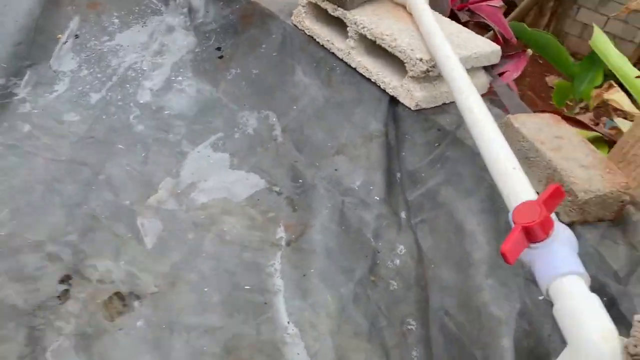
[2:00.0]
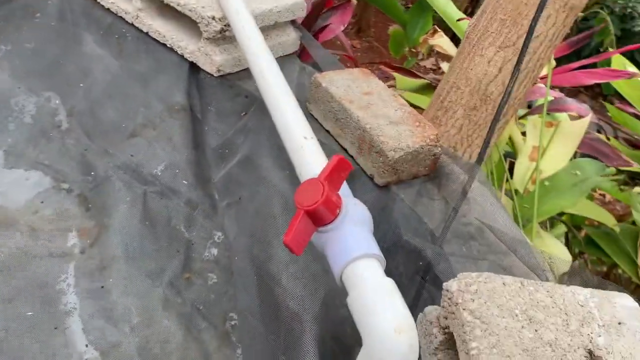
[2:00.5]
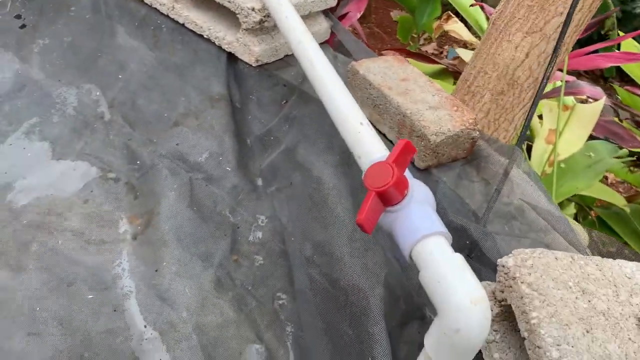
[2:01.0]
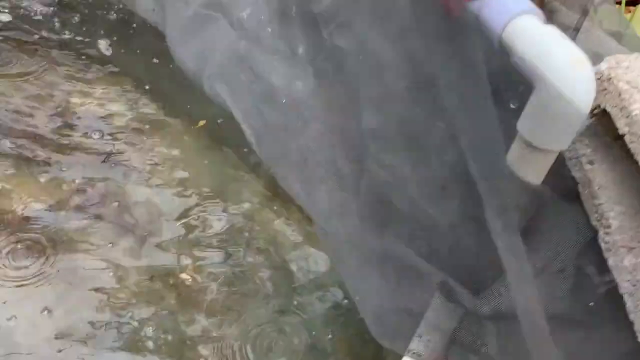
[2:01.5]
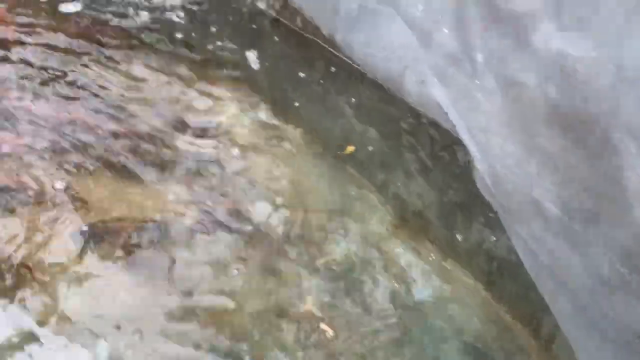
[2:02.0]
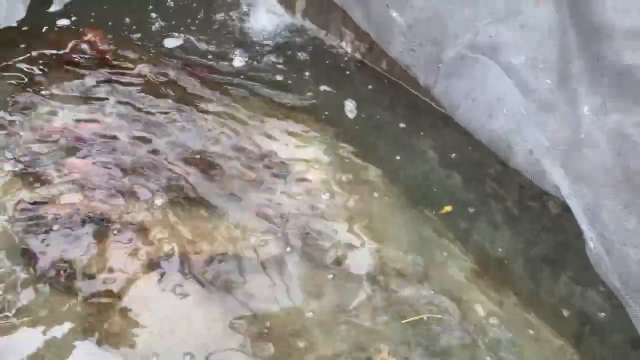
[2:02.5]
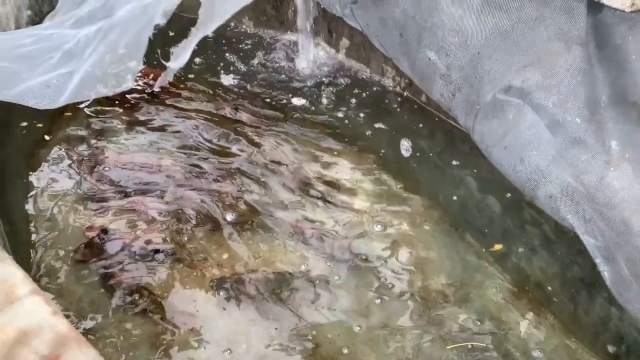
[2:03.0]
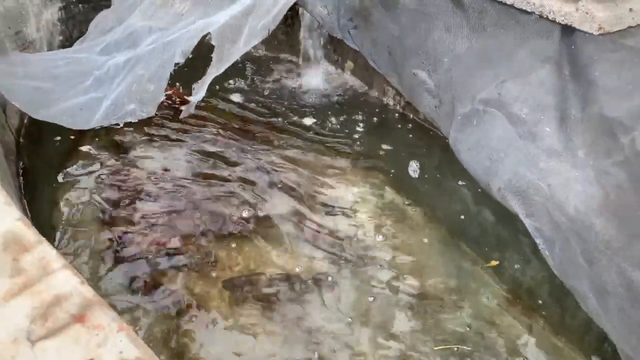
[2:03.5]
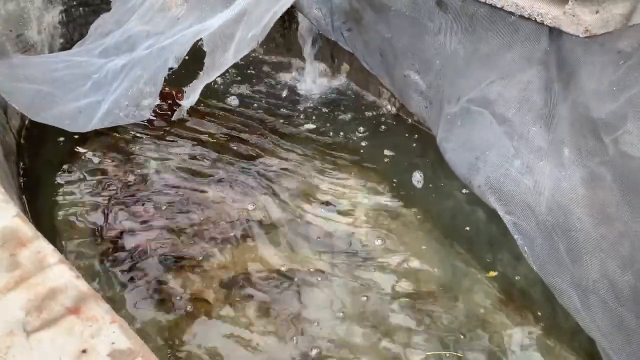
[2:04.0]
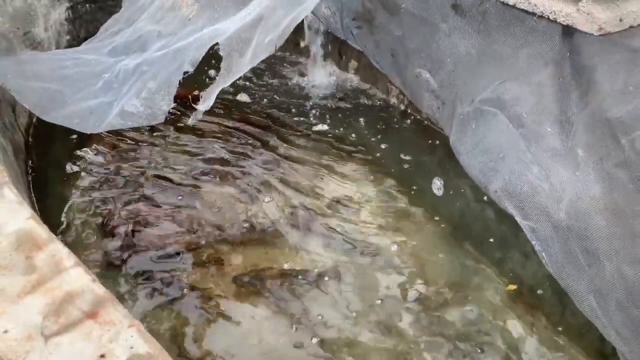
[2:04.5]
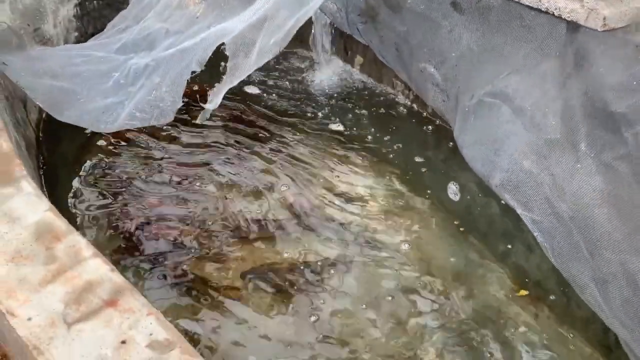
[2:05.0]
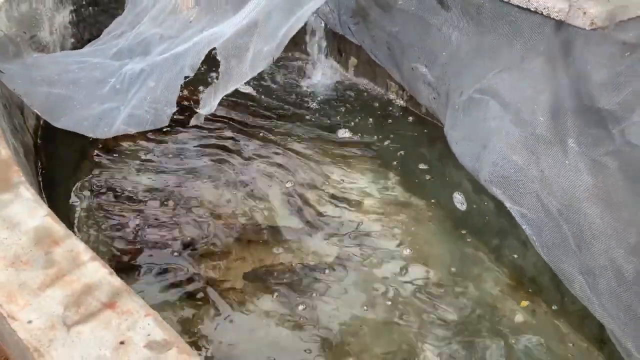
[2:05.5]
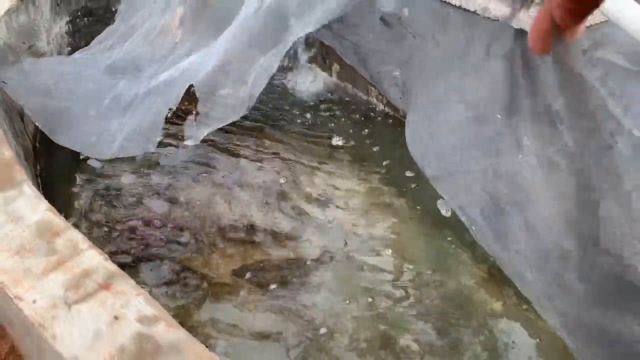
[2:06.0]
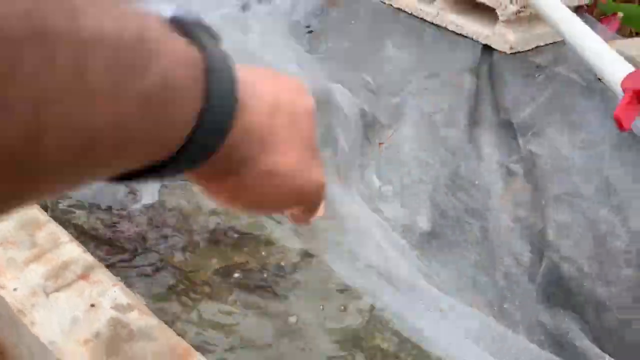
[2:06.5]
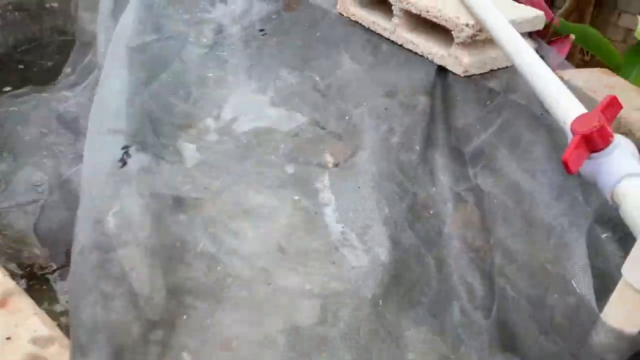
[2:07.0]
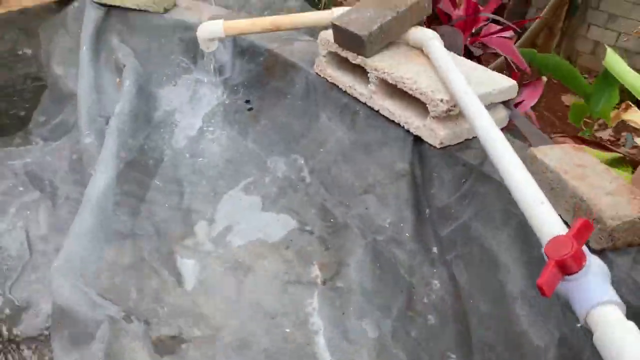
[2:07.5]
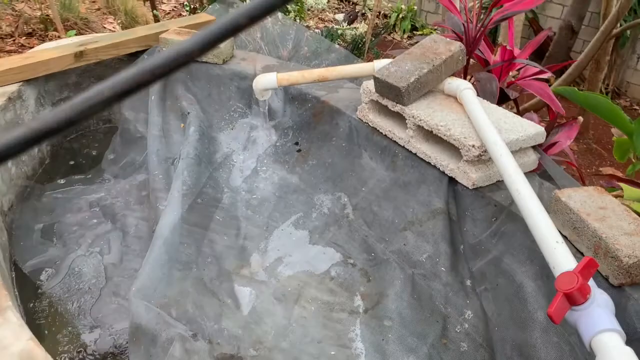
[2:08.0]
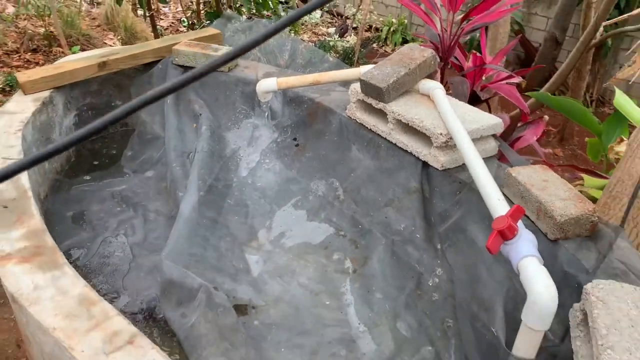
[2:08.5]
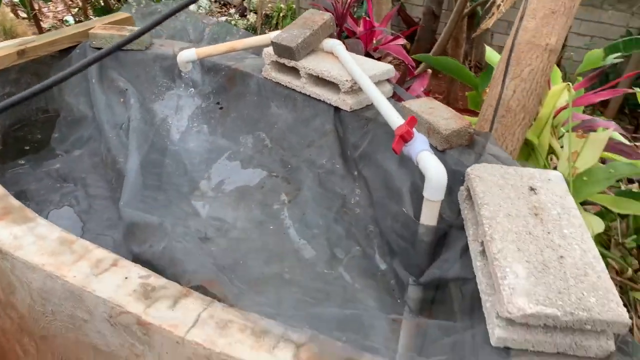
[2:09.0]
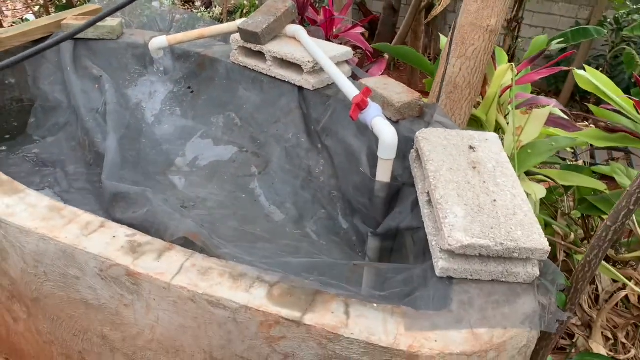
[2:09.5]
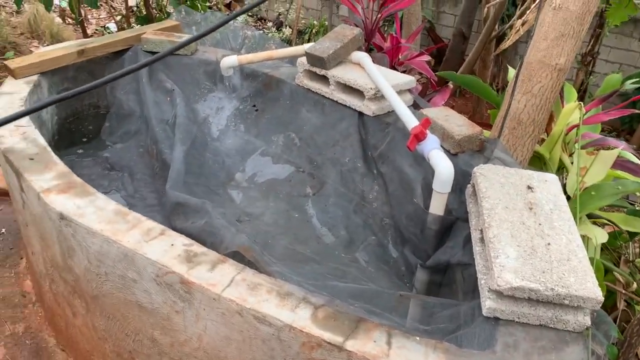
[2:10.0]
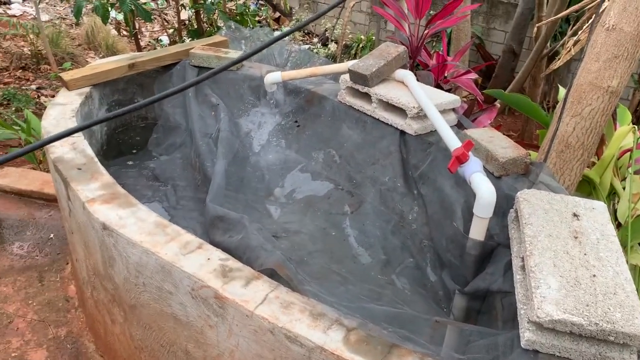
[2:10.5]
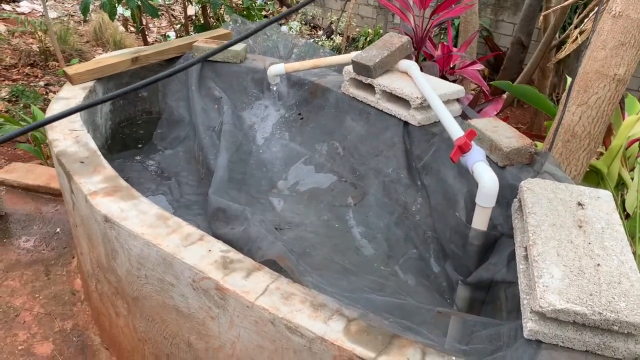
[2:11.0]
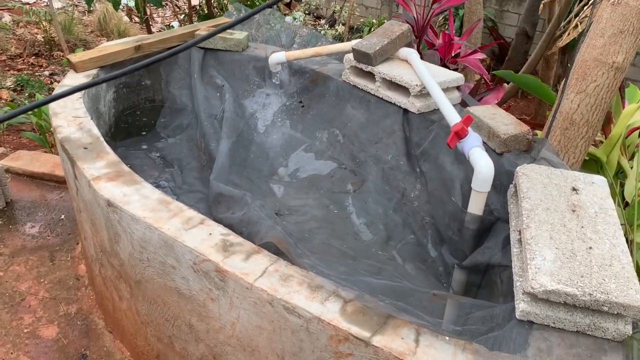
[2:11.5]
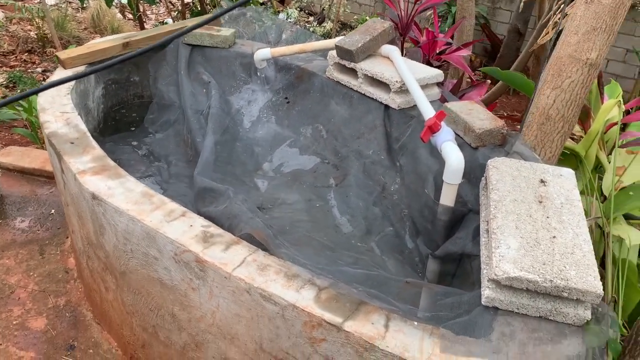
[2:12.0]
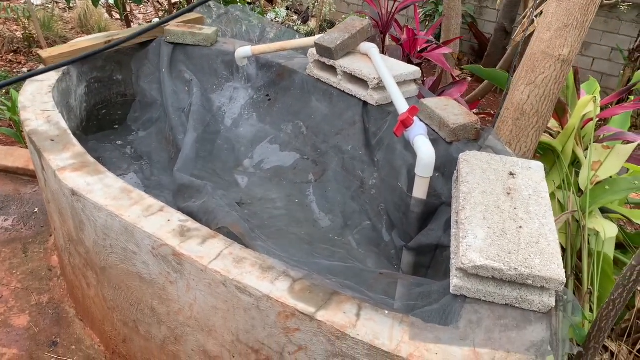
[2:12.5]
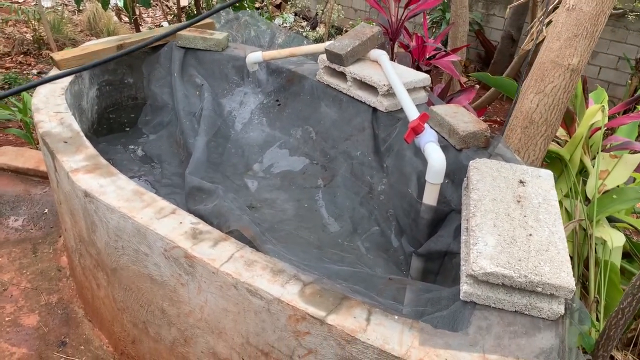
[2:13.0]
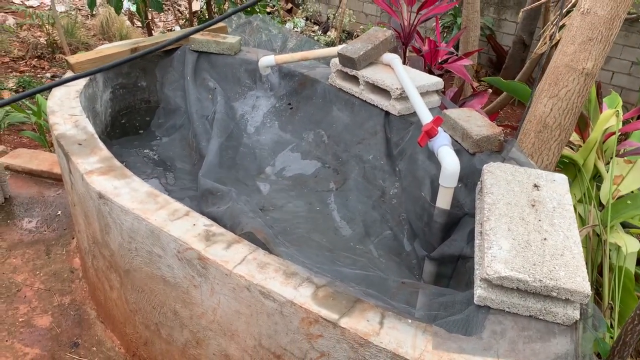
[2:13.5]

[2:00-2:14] Light gray meshing covers a cement tank with water inside and some orange fish at the bottom. A white pipe over the top has a red flap handle, and water is being added to the tank. A white person's hand moves around. White cinder blocks are over the top, with a brown piece of wood on the left side. To the right are a brown tree stem, red leaves and green leaves. The rounded cement tank is visible, along with brown vegetation and green leaves off to the left side.